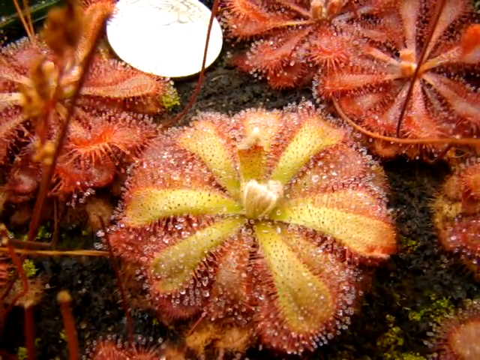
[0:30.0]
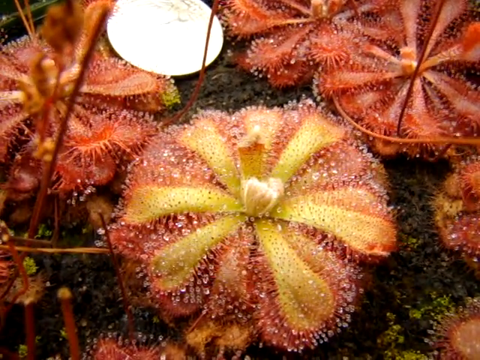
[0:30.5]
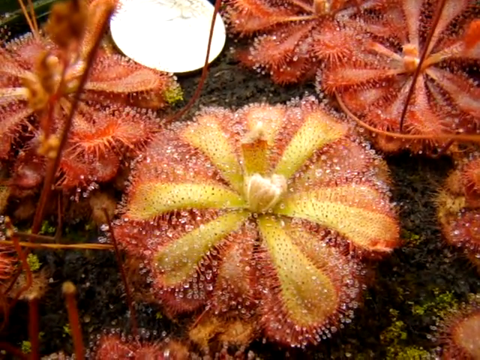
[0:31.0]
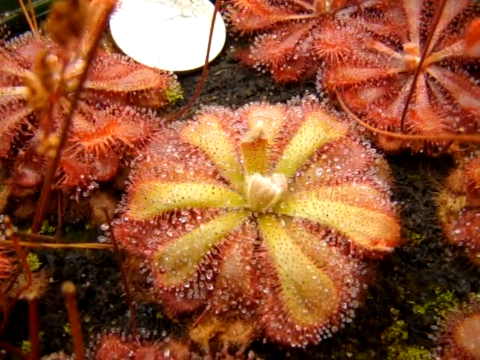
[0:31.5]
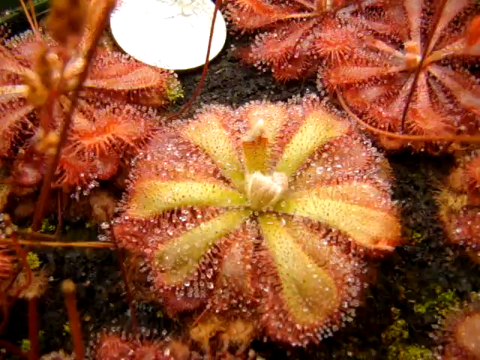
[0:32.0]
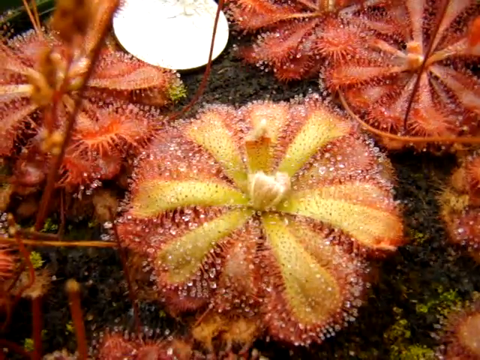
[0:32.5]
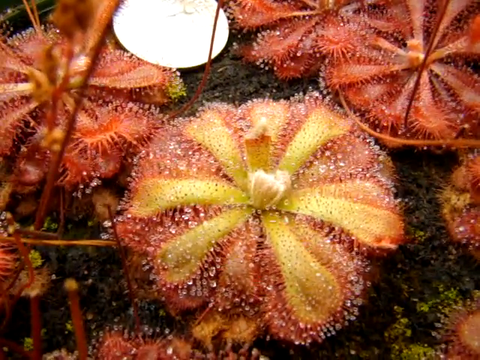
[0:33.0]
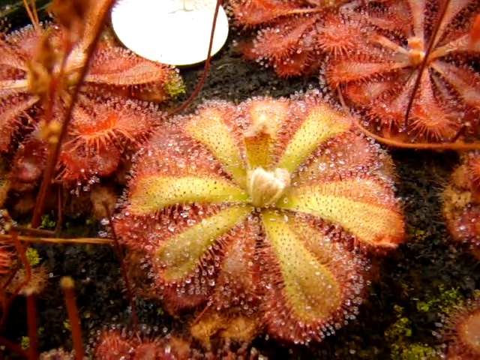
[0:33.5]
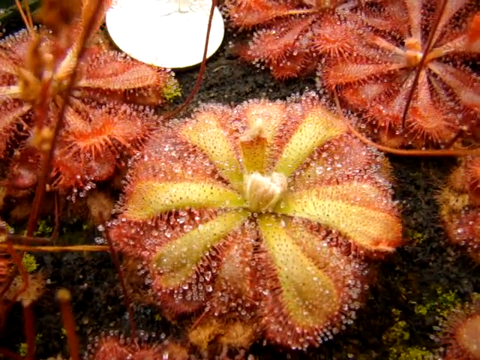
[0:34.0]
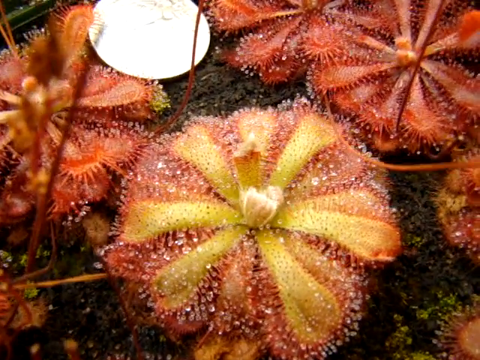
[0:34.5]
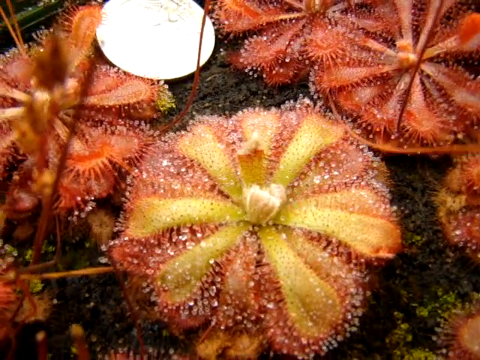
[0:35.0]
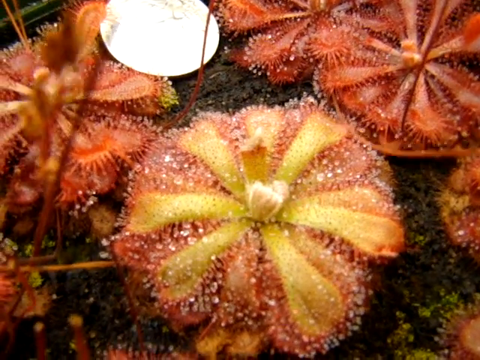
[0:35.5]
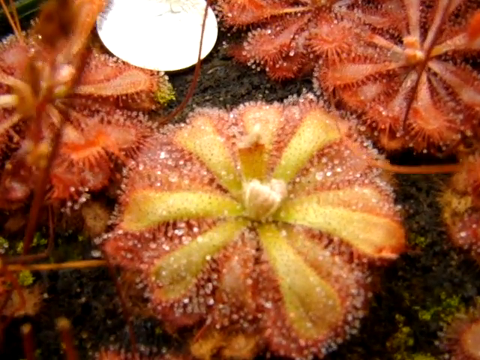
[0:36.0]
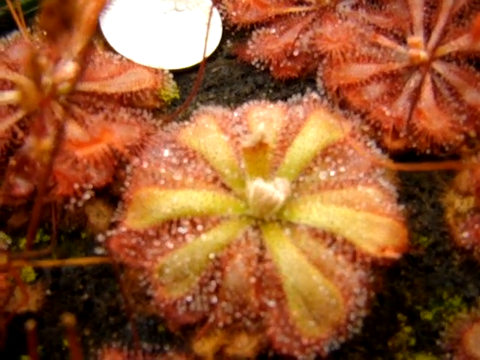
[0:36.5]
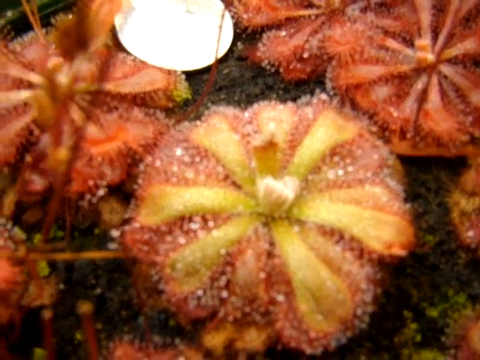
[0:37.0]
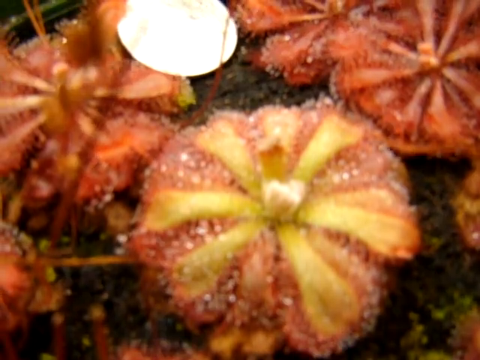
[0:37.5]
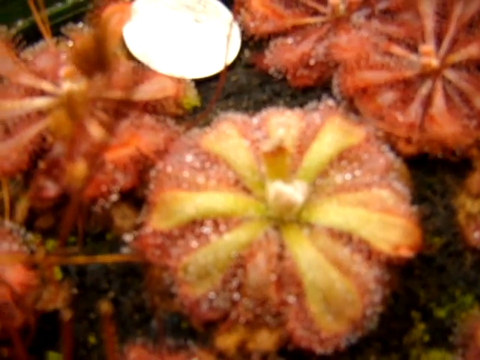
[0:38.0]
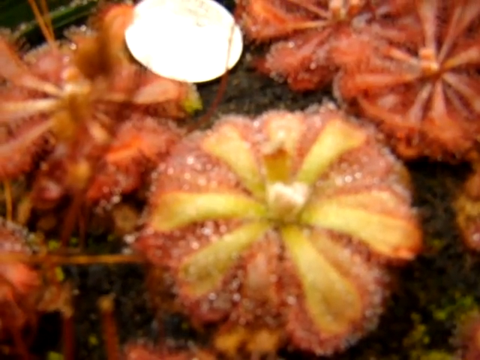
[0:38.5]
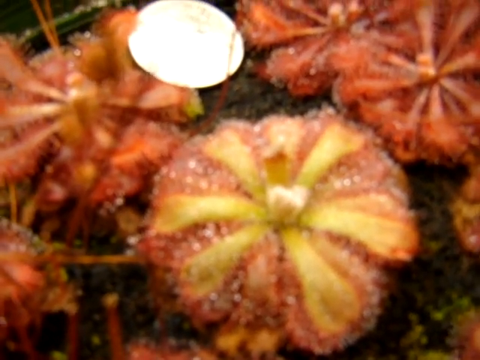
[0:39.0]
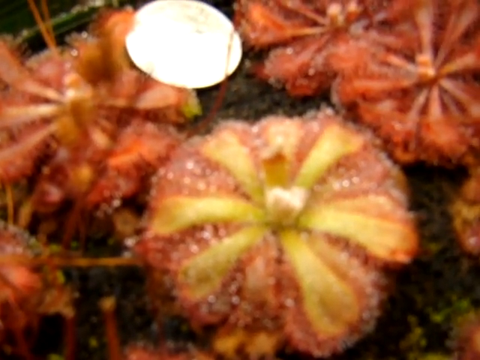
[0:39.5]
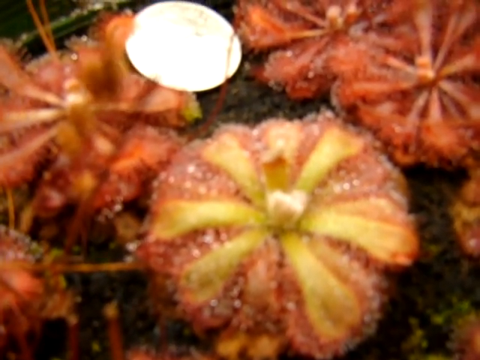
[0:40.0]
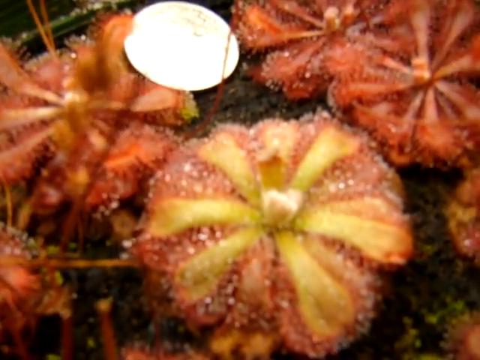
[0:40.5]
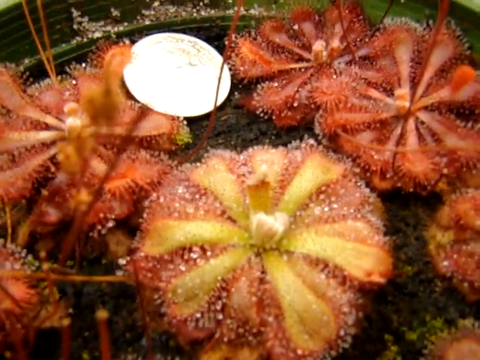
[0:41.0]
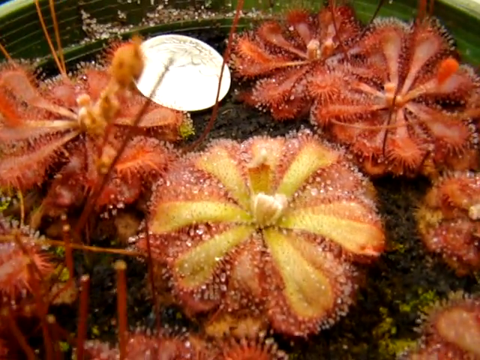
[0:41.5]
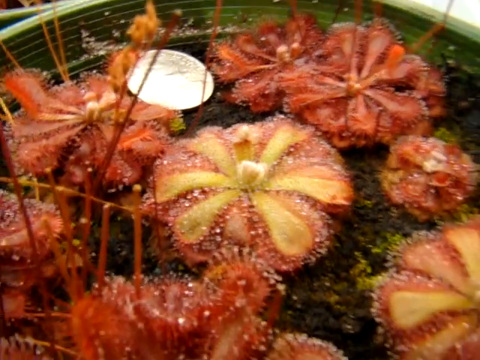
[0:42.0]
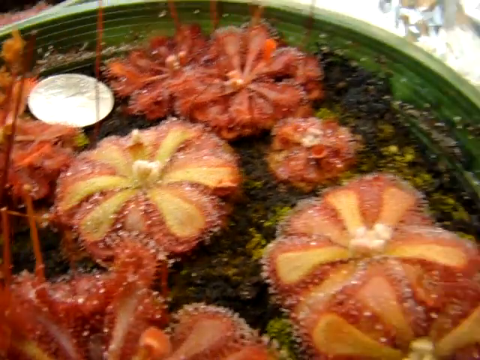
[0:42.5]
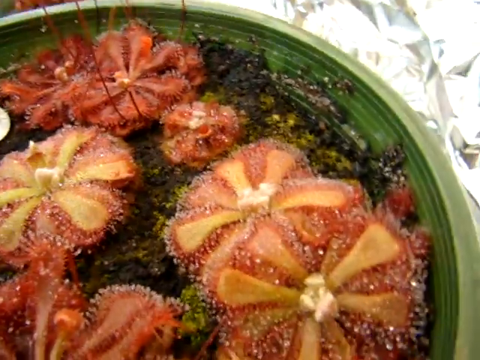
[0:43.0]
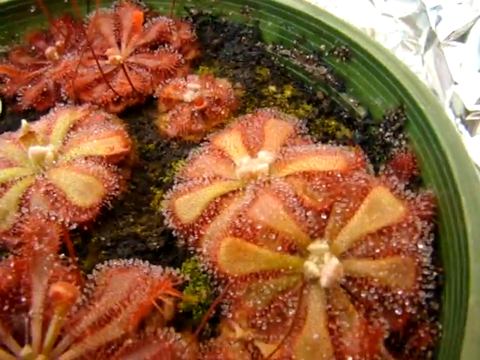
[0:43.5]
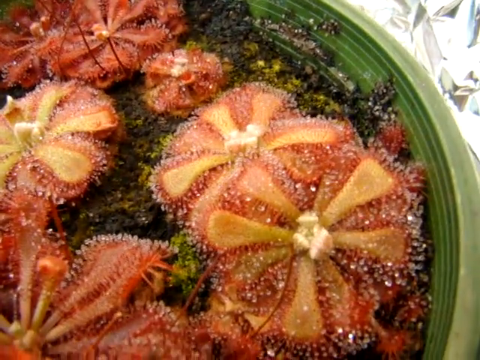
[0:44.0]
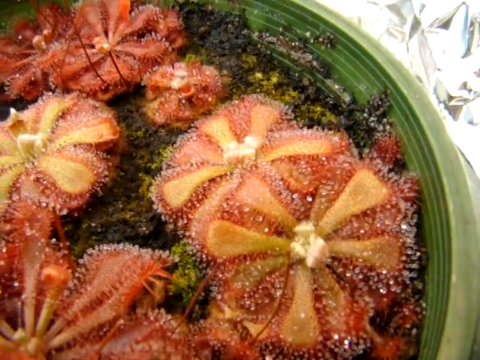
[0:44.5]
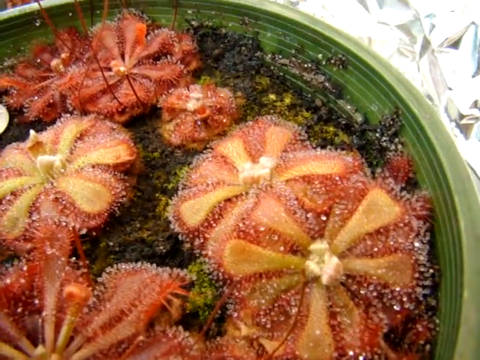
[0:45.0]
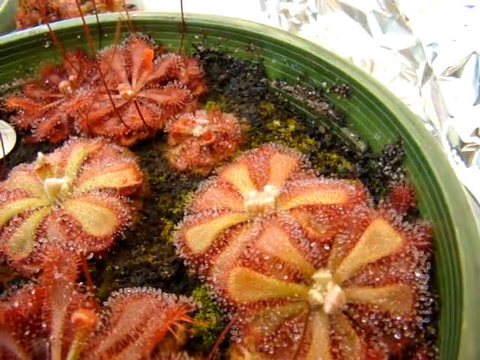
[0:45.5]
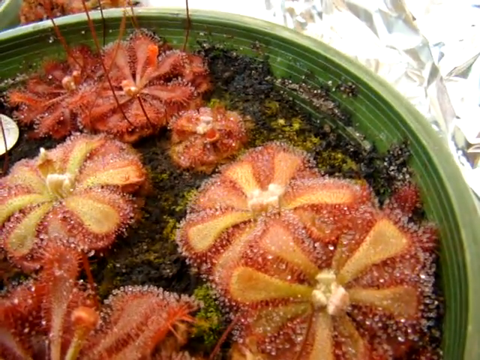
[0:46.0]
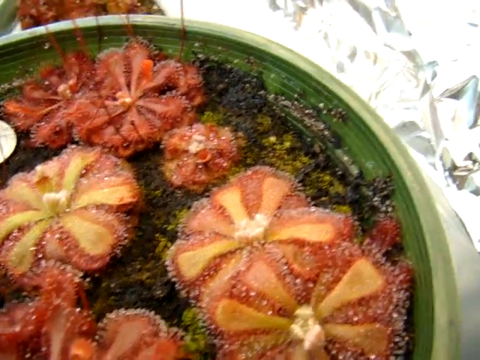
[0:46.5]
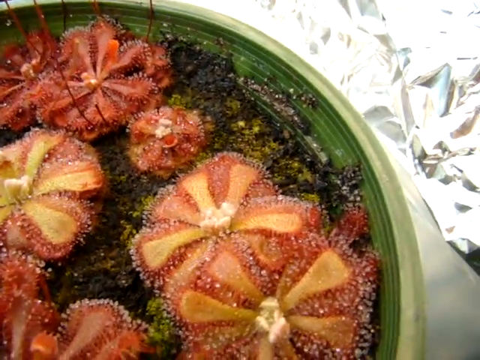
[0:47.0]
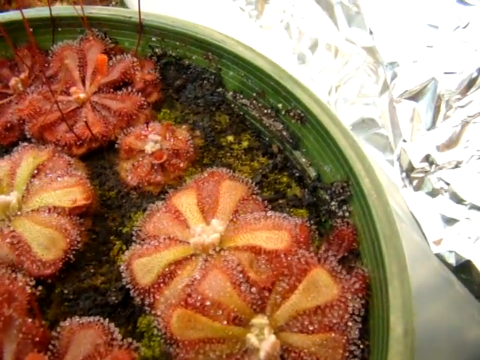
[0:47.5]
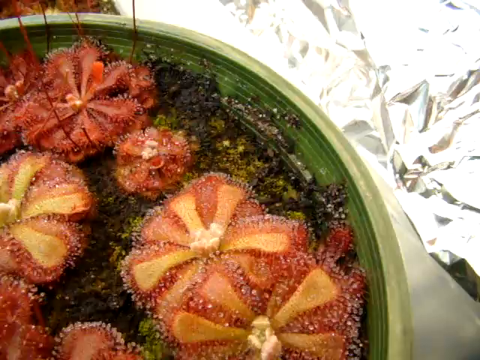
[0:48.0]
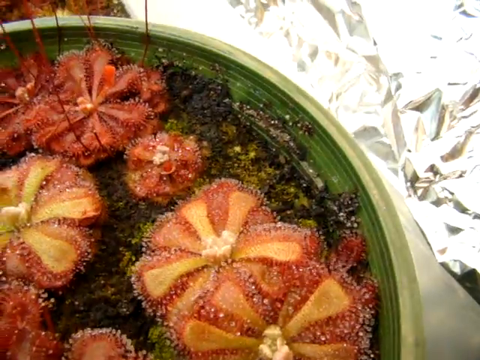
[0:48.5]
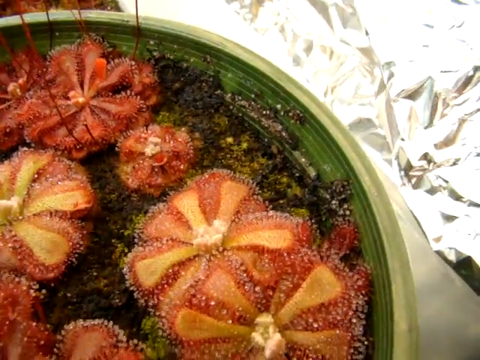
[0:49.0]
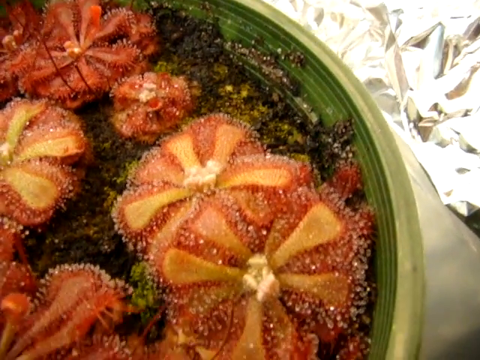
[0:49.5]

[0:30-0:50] There is a little bit of movement, to the left or right. Something whitish is right next to the plant. Then the side is shown, where there is something shiny that looks like a piece of paper. The view zooms in and out on this specific part of the picture. The plant has about six parts that look like leaves. It looks orange with some green leaves, and no stem grows on it.